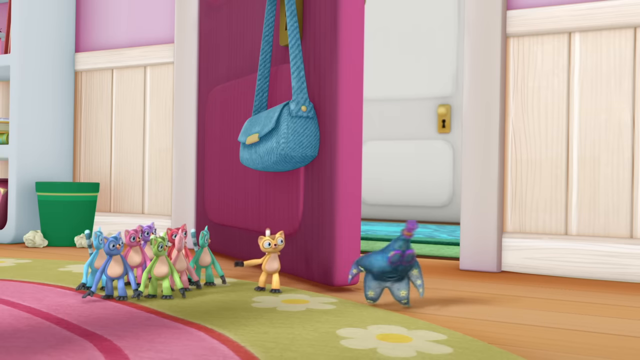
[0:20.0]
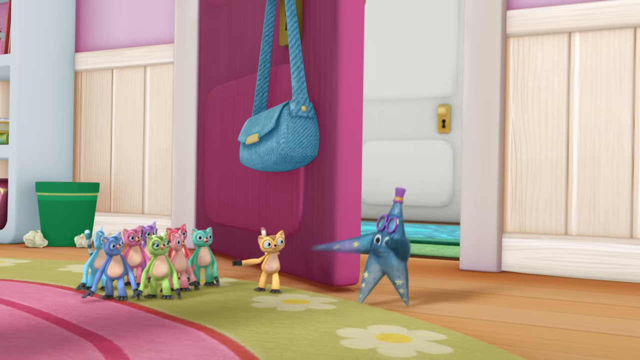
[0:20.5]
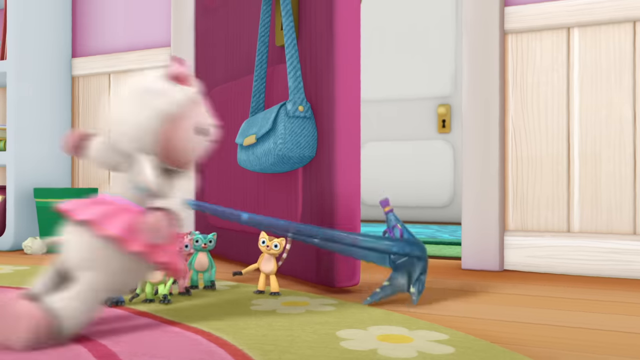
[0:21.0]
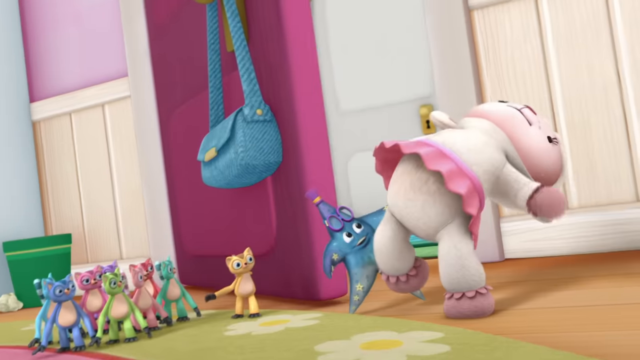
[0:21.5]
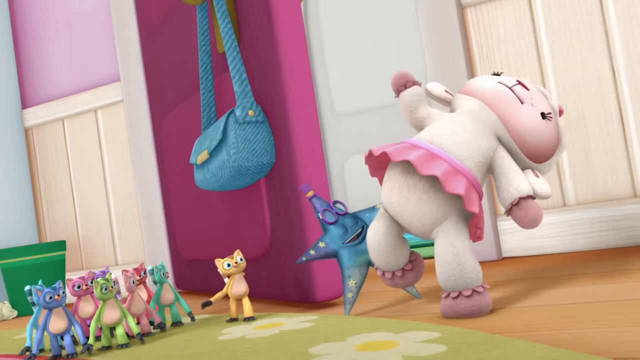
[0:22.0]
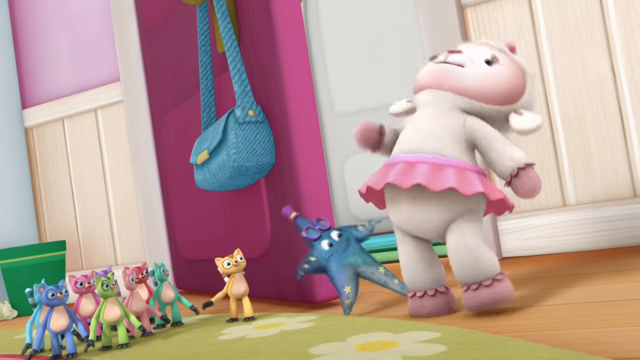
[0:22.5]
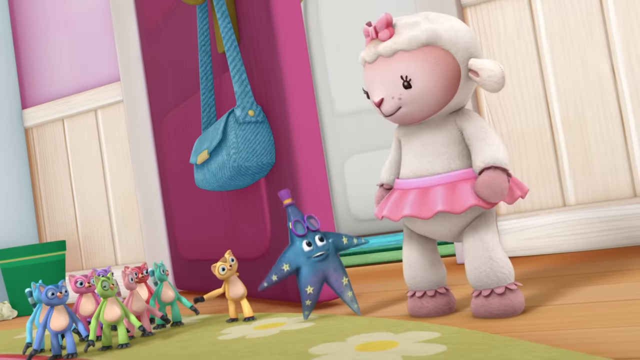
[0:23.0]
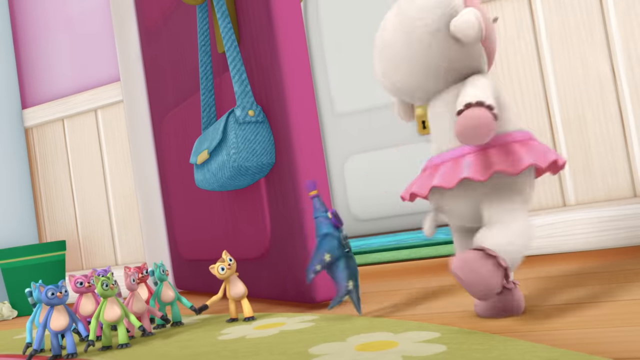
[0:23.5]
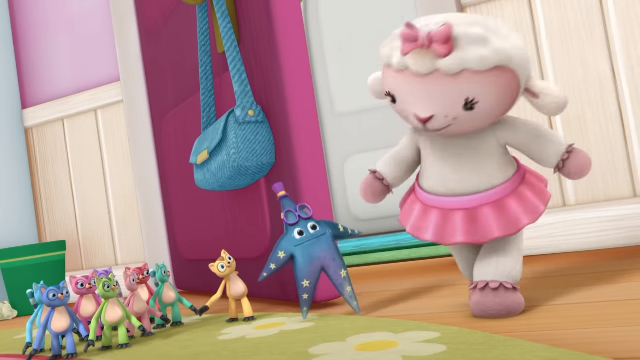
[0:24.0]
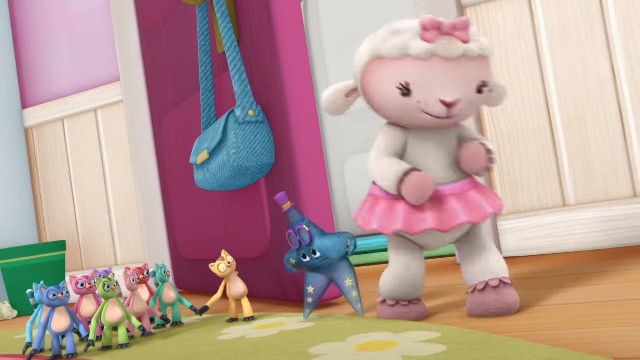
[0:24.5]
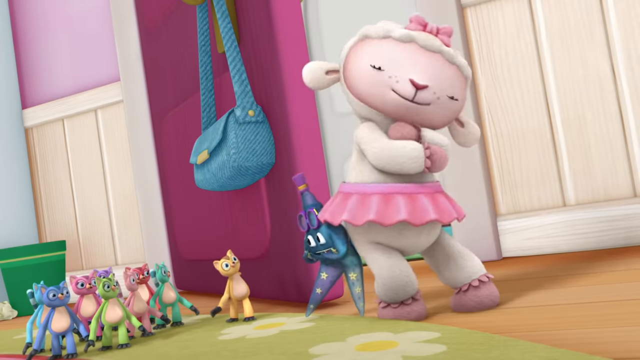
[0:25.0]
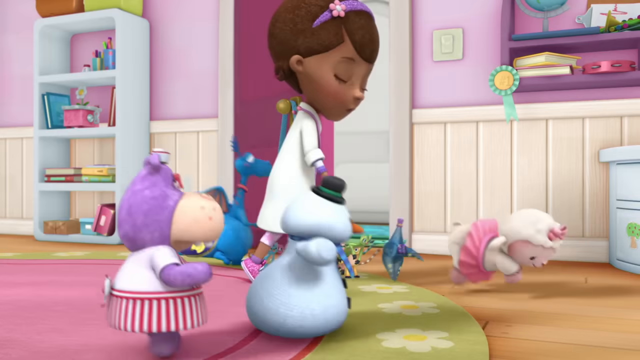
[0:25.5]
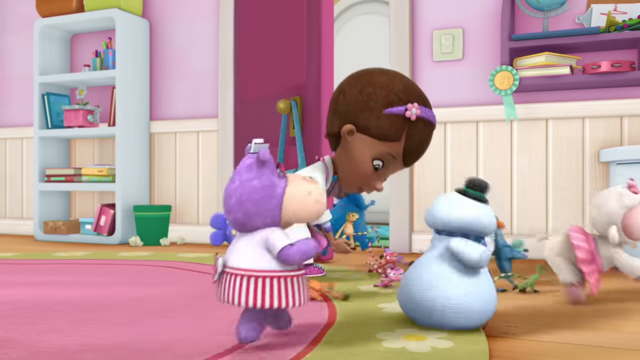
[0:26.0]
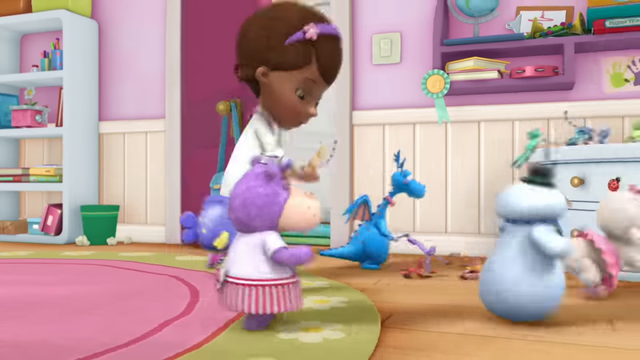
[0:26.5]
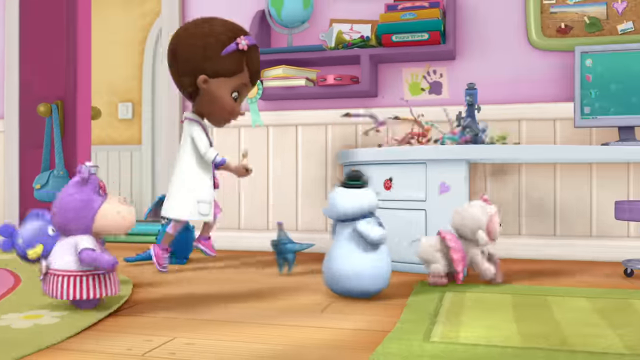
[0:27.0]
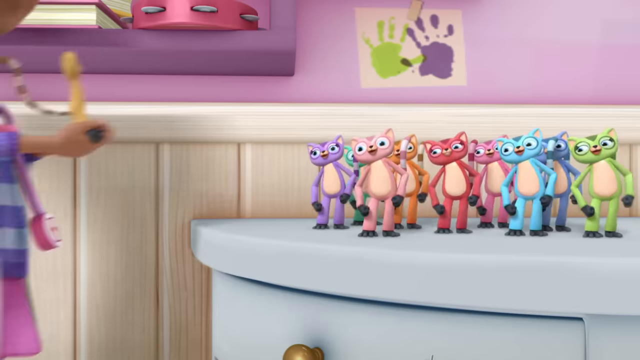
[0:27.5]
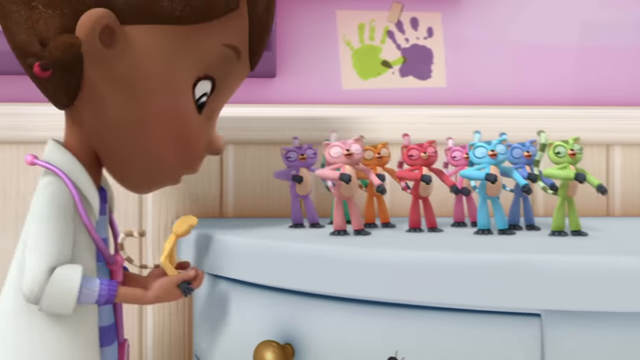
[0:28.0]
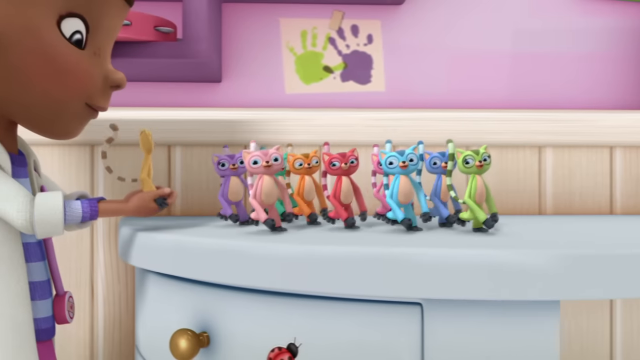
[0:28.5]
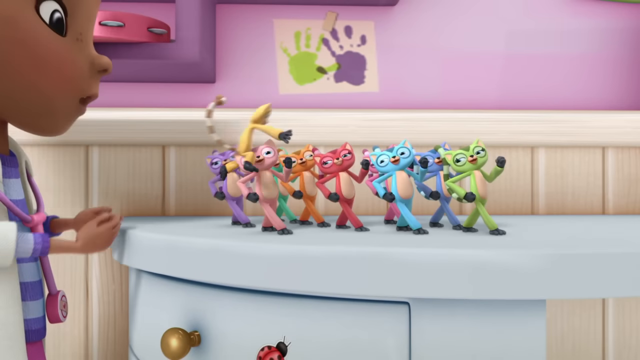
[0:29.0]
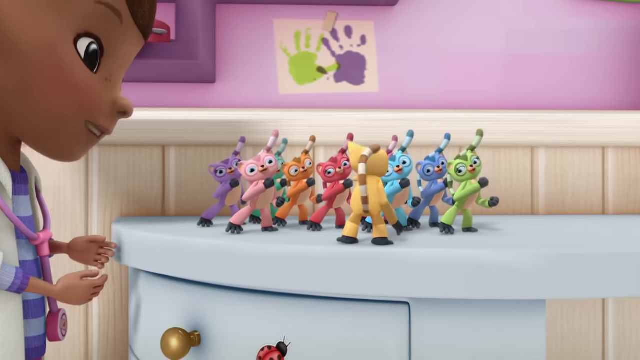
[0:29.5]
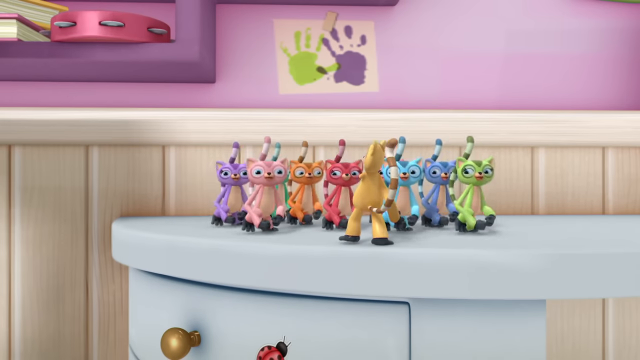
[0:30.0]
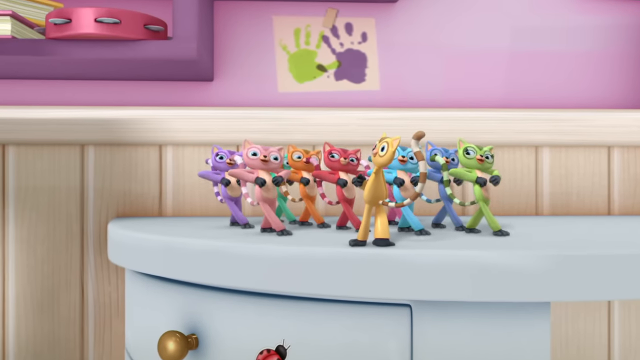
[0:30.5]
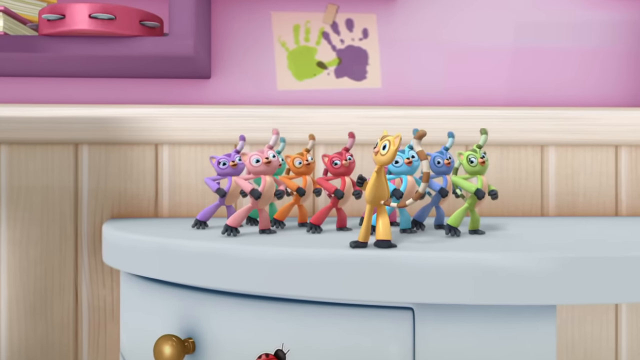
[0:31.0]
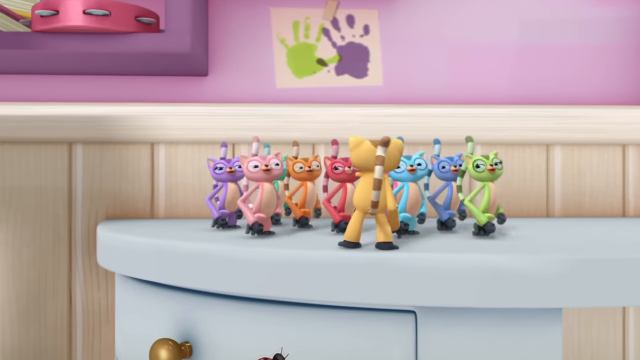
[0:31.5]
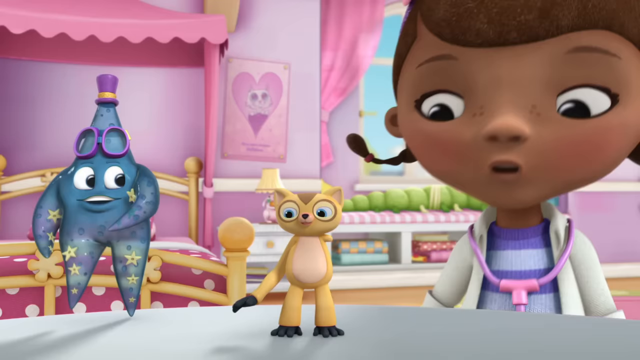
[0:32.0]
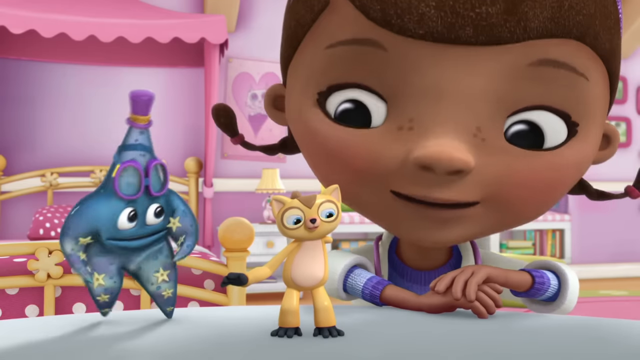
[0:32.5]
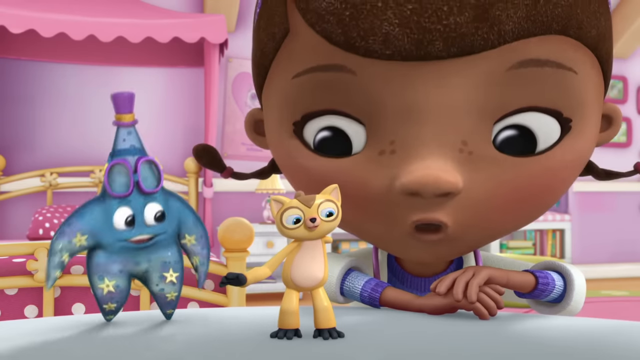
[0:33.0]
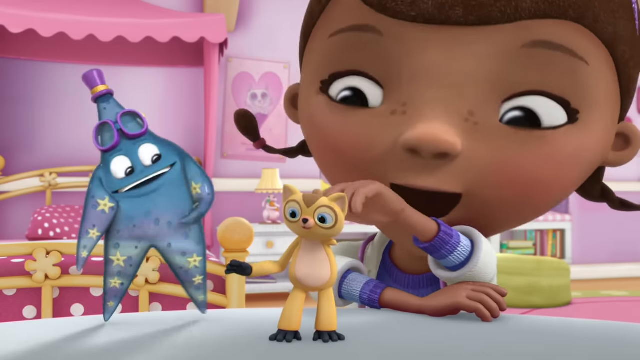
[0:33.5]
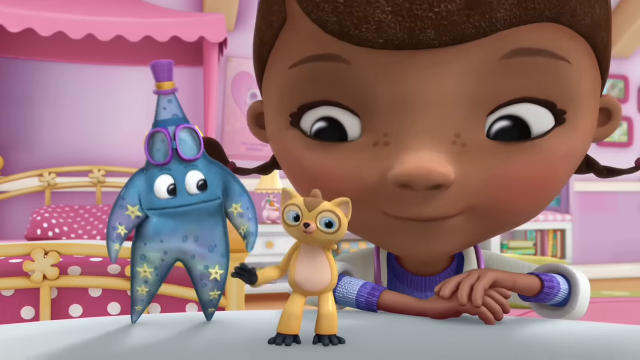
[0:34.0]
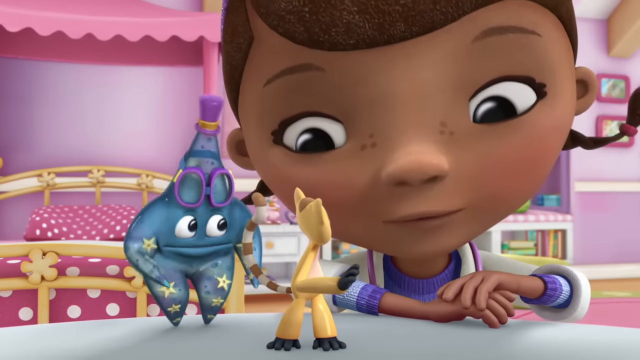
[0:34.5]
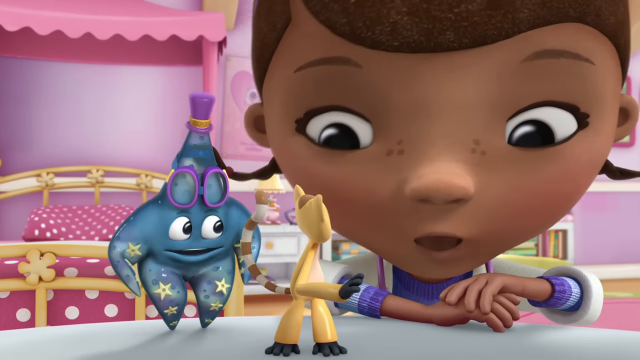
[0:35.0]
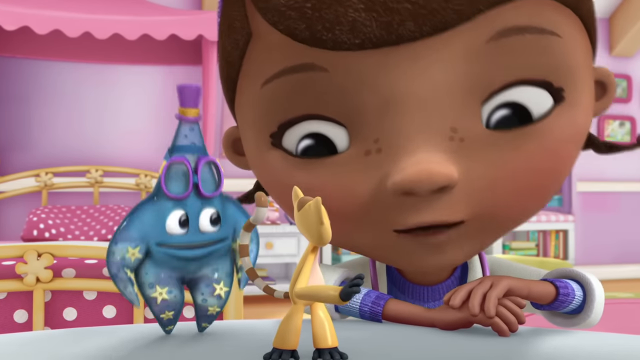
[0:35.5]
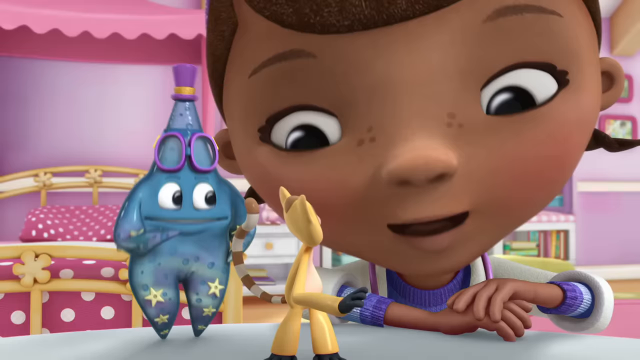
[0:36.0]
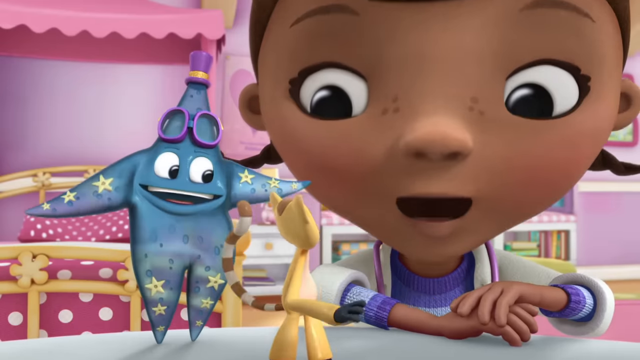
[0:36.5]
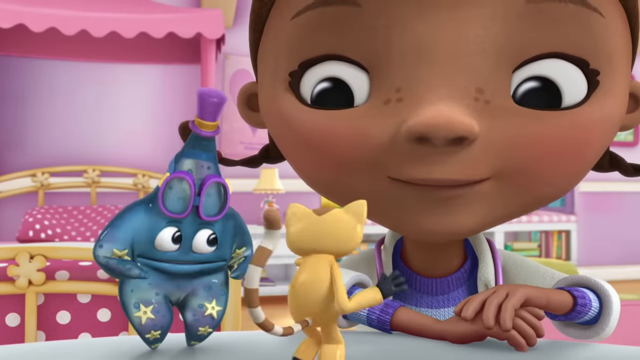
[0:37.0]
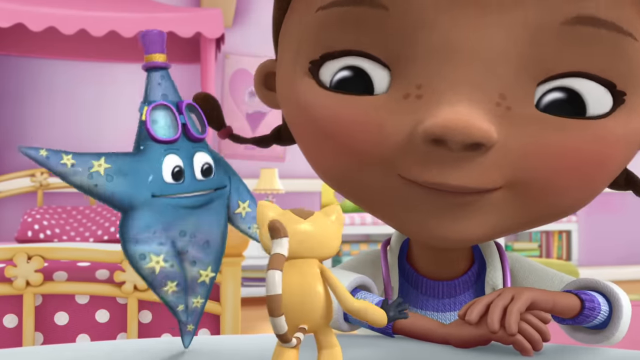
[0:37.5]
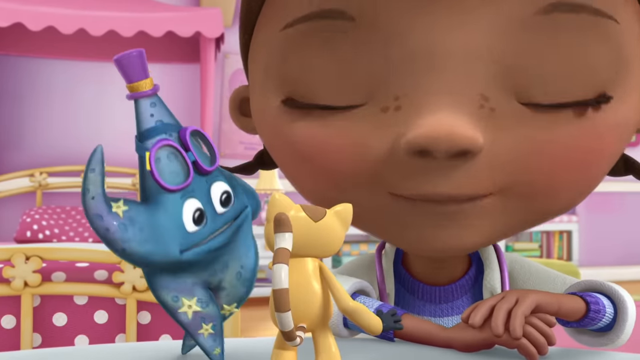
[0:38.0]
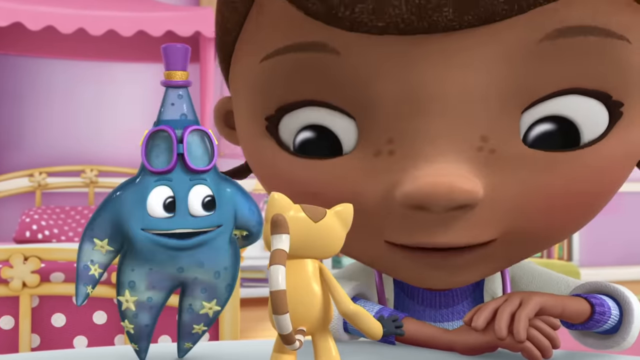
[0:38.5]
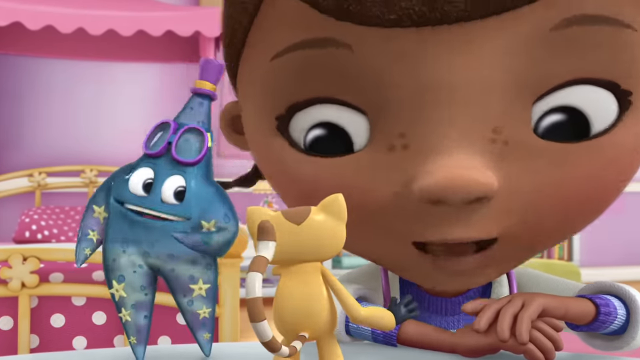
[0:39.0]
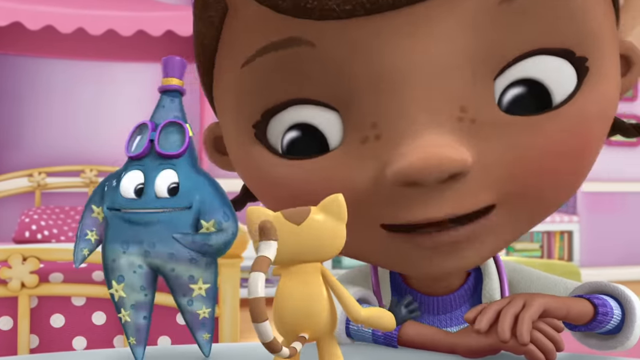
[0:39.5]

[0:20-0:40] The star goes with the sheep, and all of the characters go to a white desk with a computer. The small animals, apparently lemurs rather than cats, about 20 of them by the look of it, dance on the desk. The star and another pink one, possibly a lemur, talk about something, and then the one lemur goes to dance with the others. The room has pink doors and pink walls with white add-ons on the wall, and there is a desktop computer on the desk.